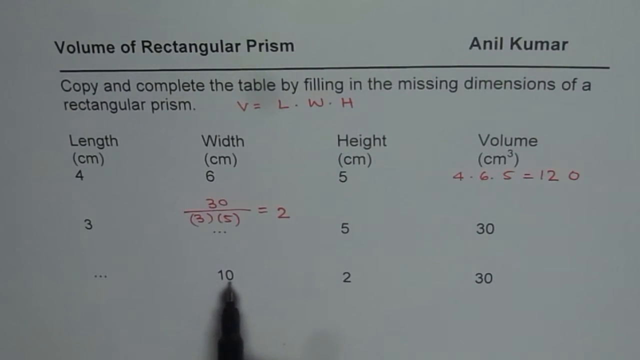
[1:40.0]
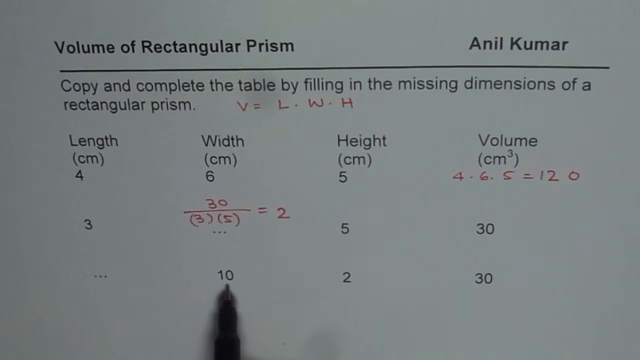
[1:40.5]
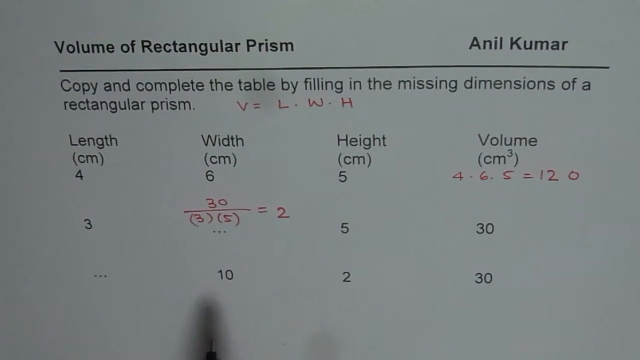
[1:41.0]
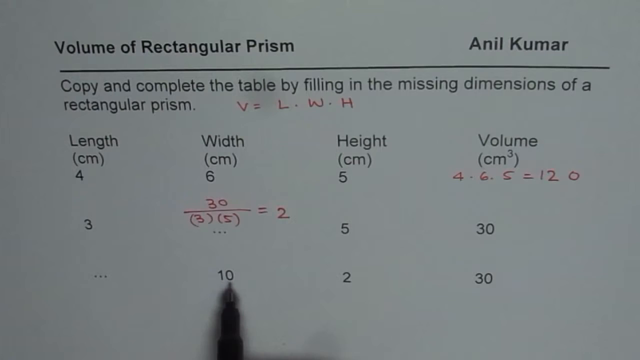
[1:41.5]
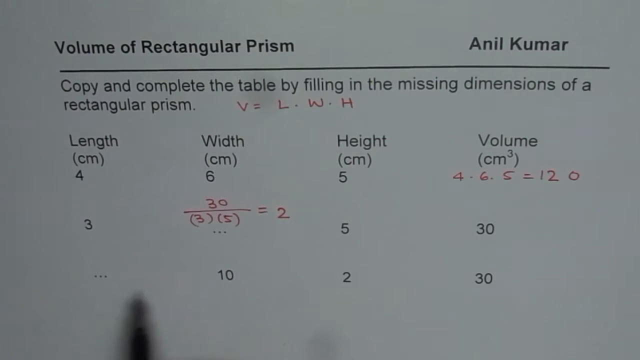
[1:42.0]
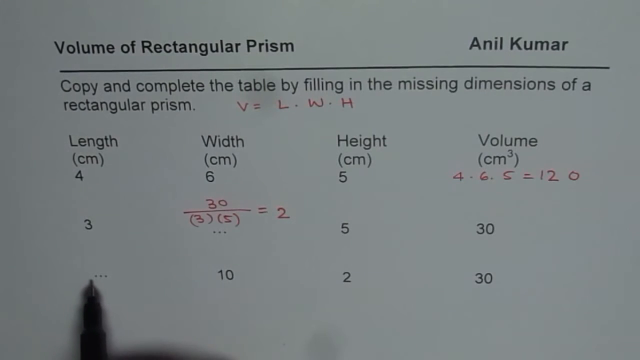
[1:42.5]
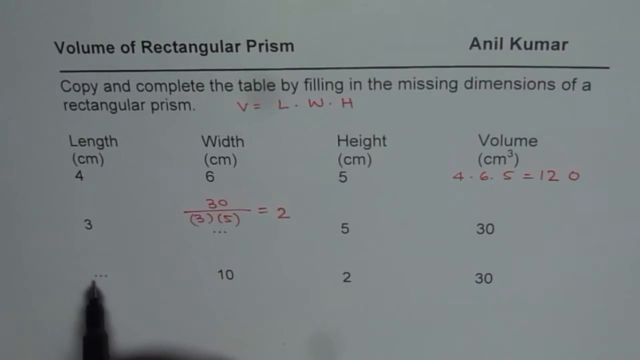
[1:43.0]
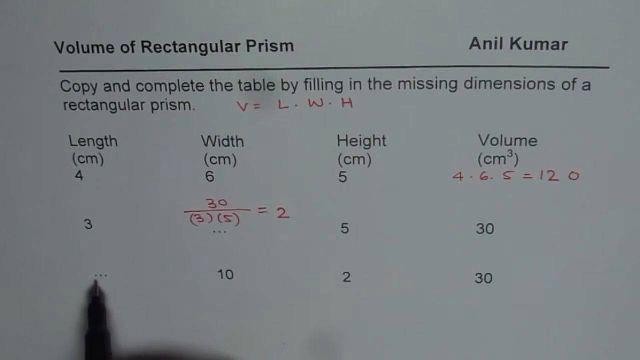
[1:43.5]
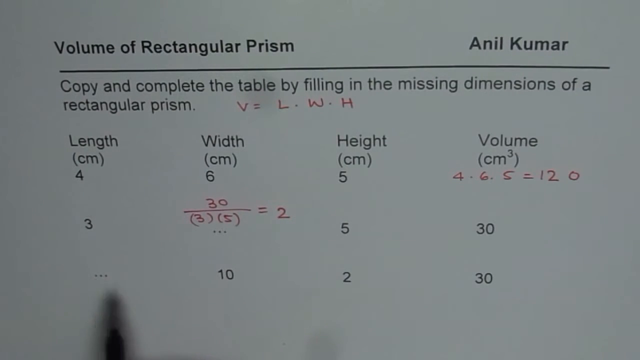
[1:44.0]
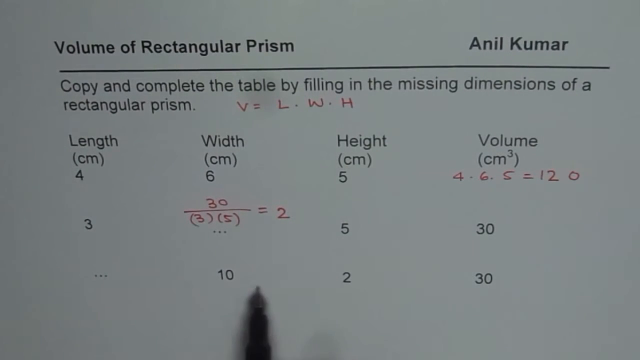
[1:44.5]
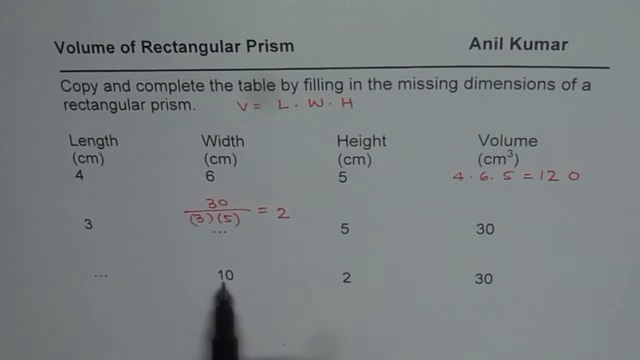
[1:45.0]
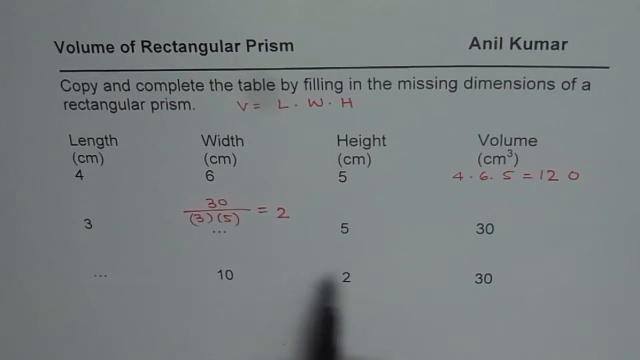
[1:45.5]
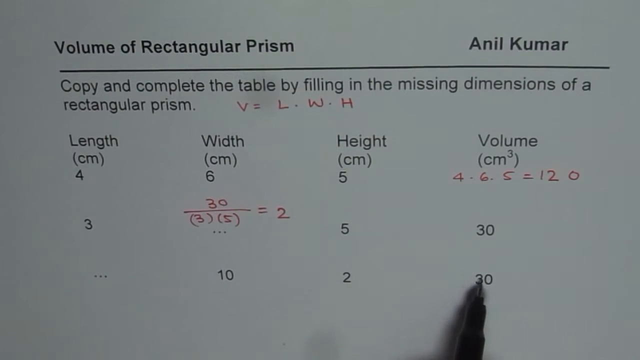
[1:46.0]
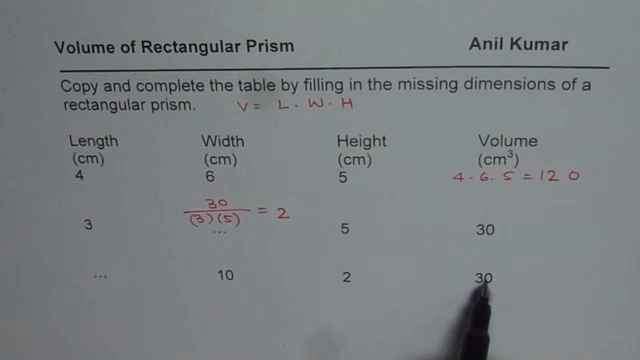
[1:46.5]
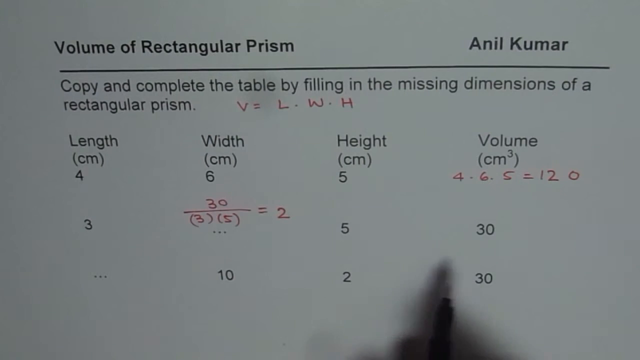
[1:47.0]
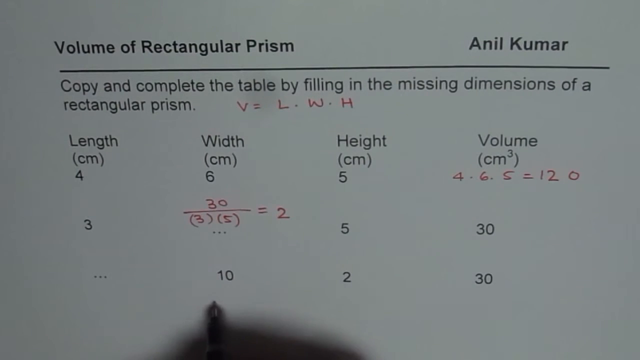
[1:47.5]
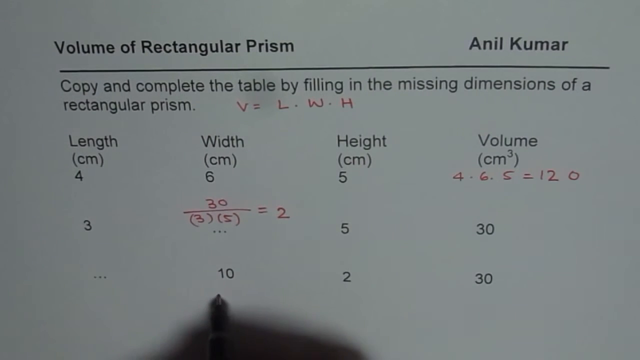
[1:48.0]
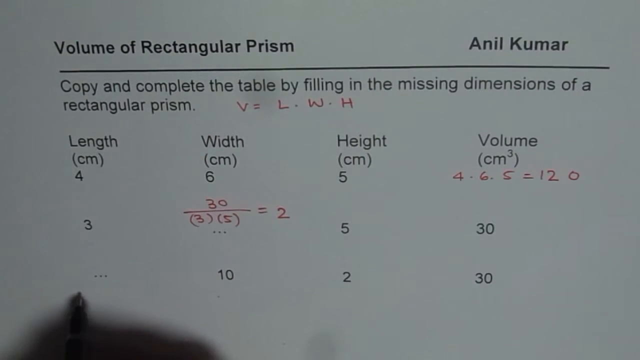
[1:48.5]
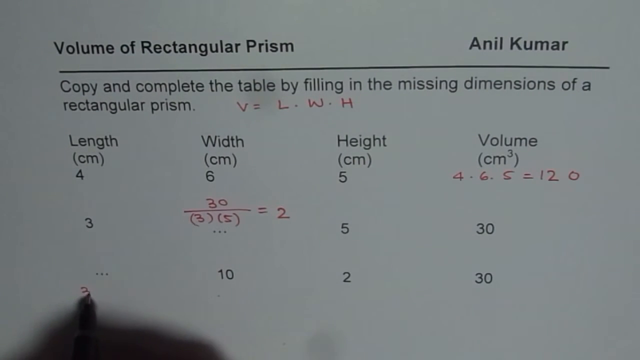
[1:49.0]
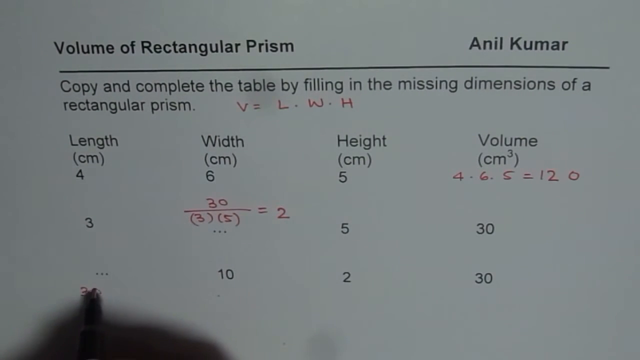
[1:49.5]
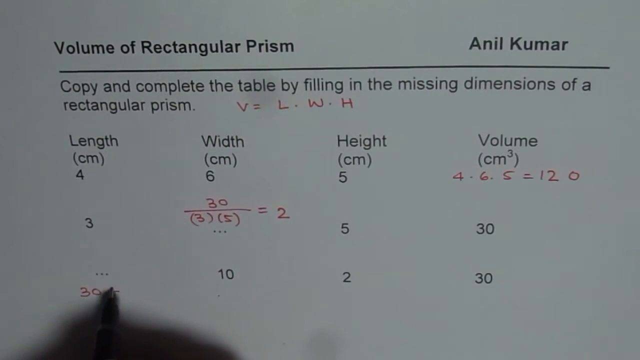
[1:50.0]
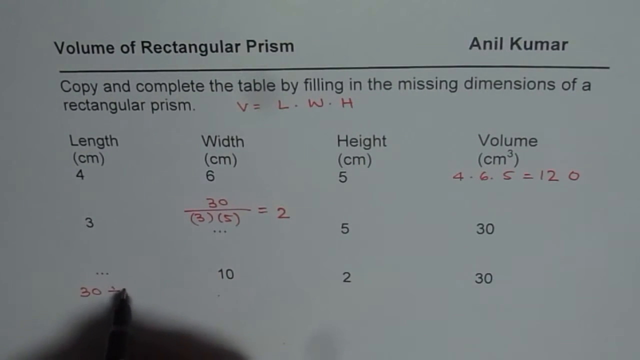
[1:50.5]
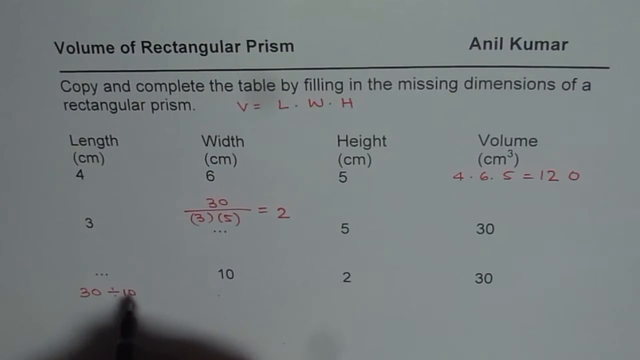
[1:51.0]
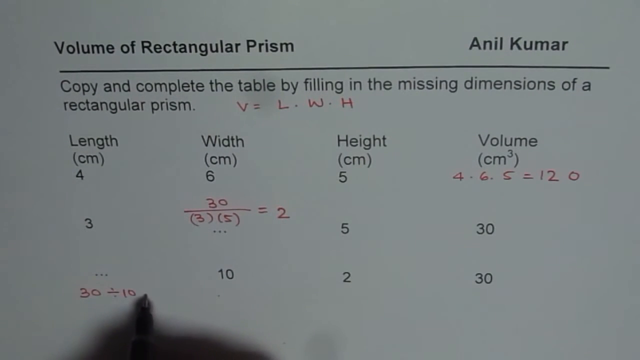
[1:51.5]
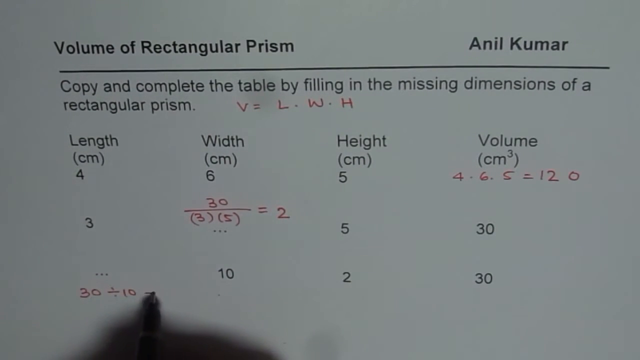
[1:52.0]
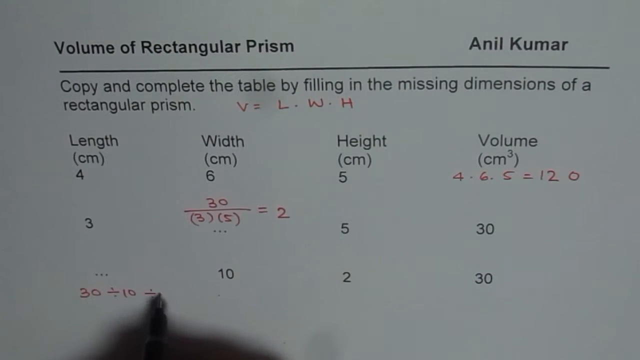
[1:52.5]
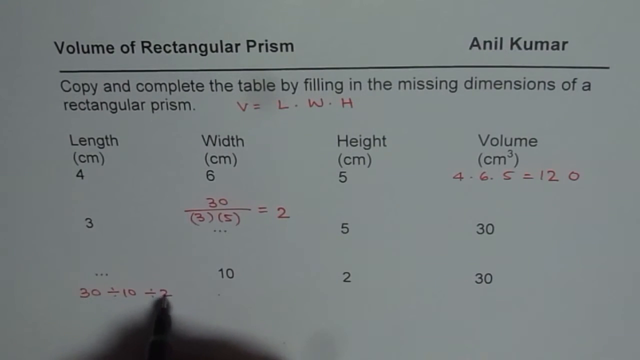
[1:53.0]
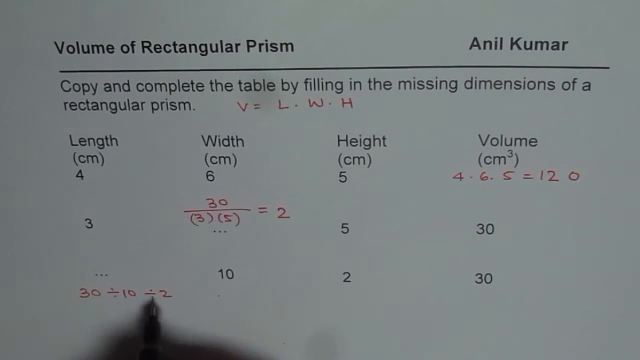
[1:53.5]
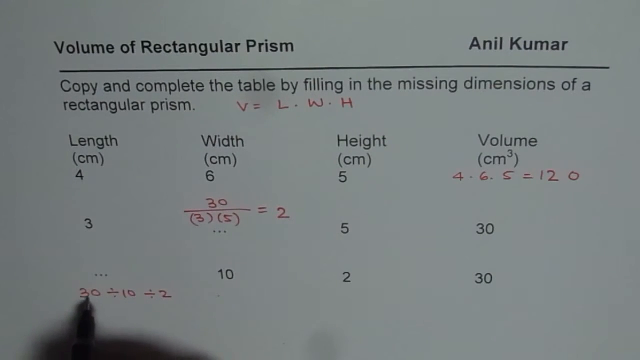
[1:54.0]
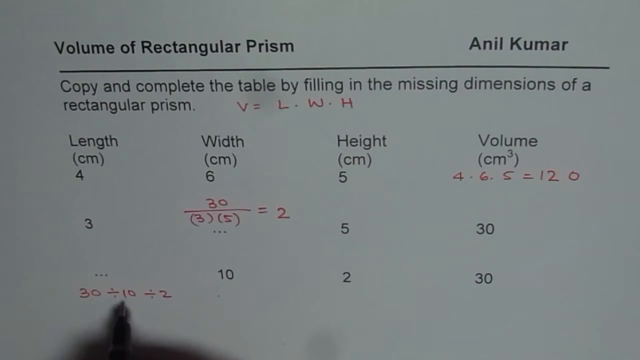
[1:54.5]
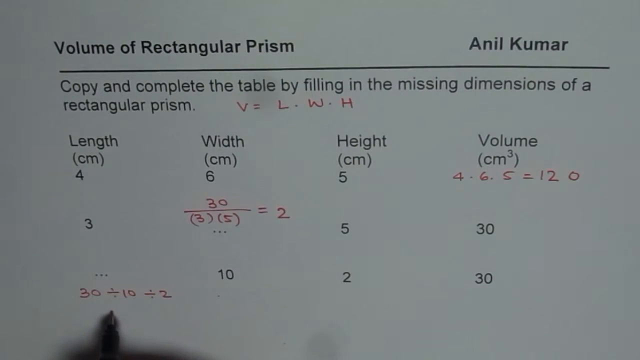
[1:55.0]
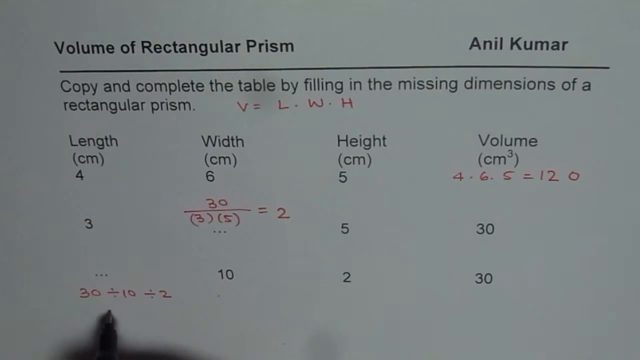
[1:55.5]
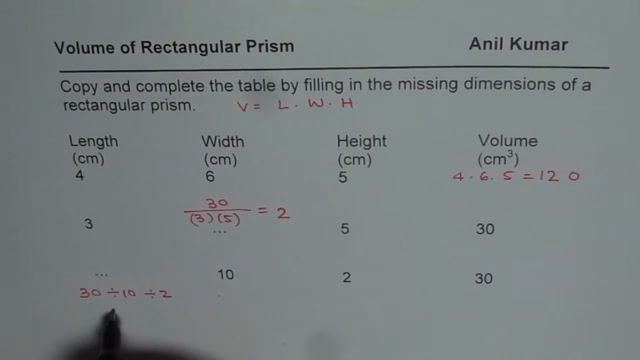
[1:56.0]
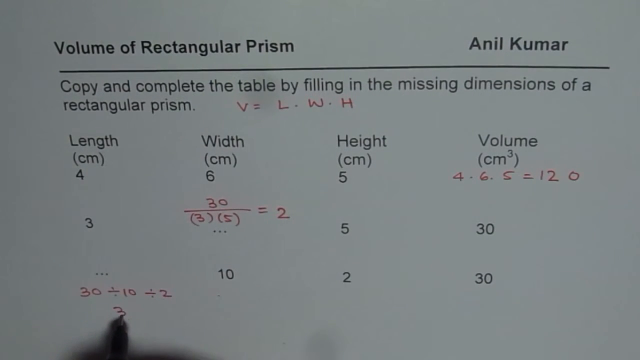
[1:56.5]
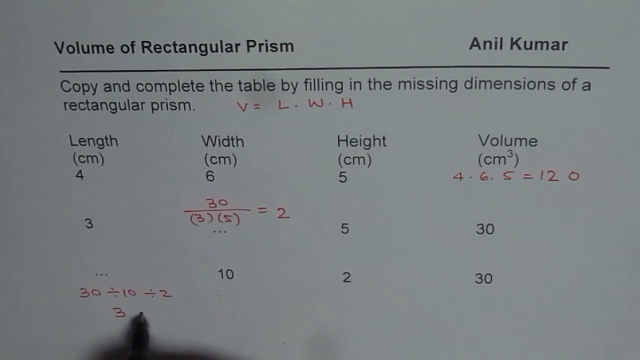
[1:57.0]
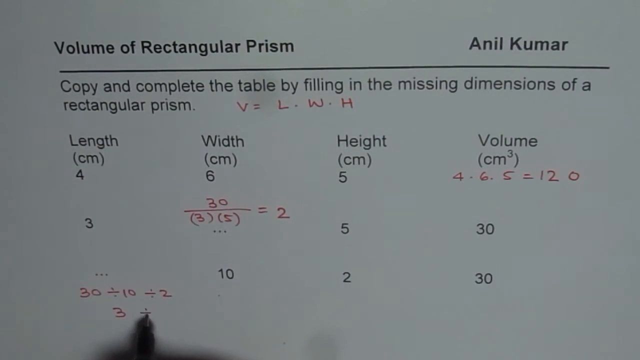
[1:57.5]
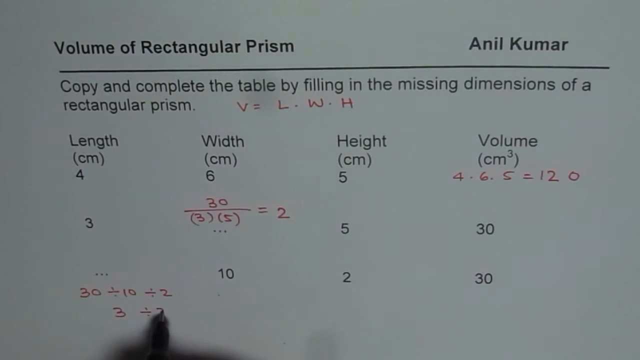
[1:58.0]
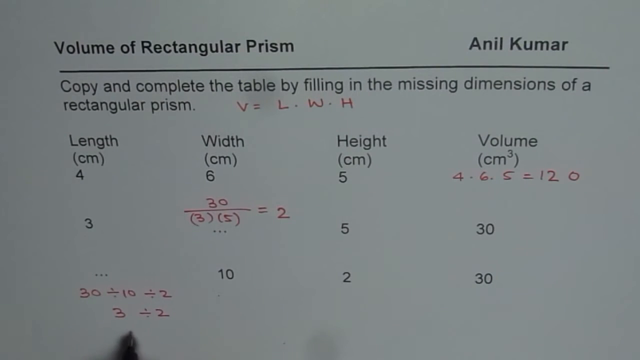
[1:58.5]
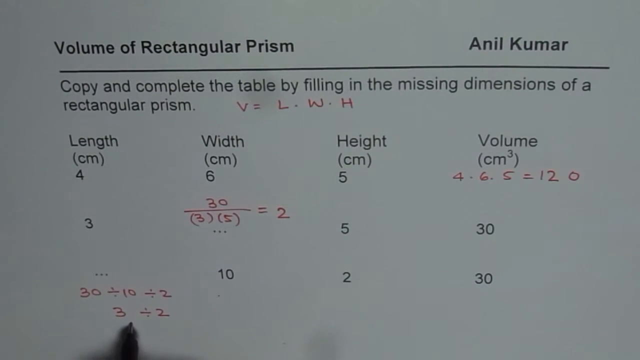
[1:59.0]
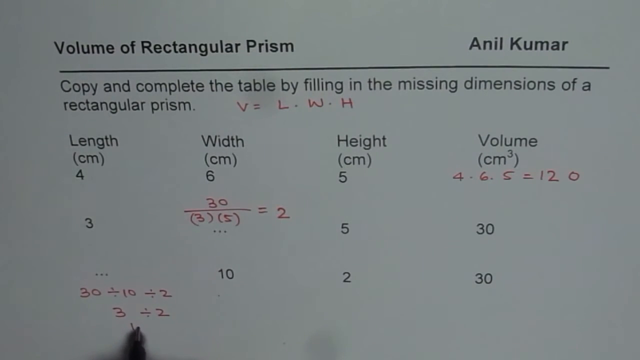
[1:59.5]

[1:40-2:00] The person's pen rests under the width column in the last row of numbers, where there is a 10. They hover the pen under the 10, then move over to the length column, which is blank in that row, then to the height, back to the width, and then to the far right in the volume column, where the number is 30. They sort of hover around it, move back to the width column under the 10, and put a small dot there where the pen touches the paper. They move back to the far left to the blank space under length and write 30 ÷ 10 ÷ 2 in the last row of the length column. Underneath that division they write another division problem, 3 ÷ 2.